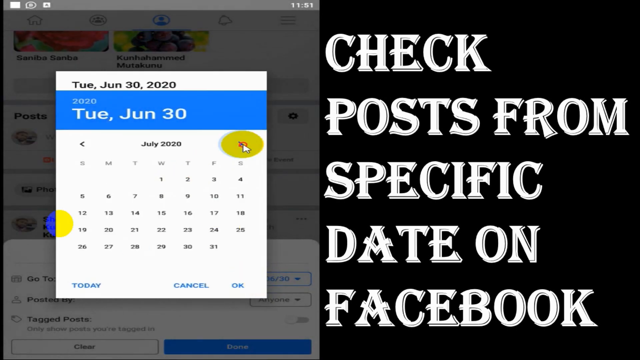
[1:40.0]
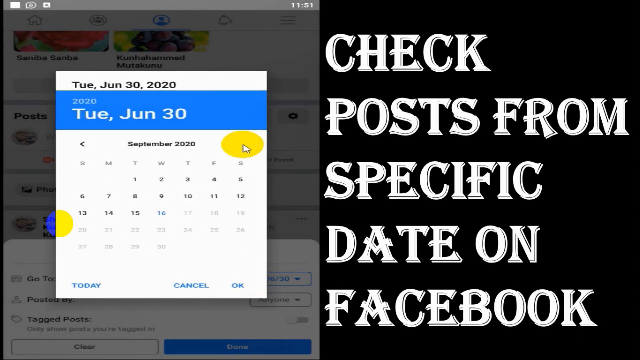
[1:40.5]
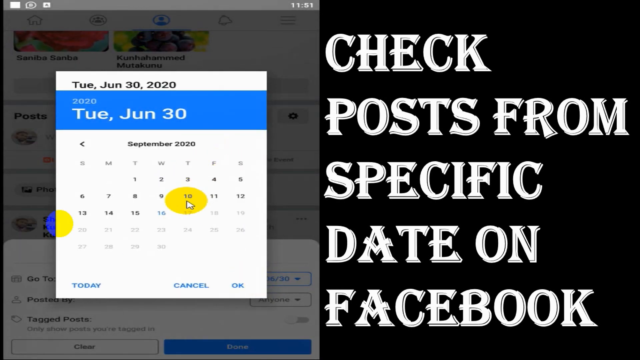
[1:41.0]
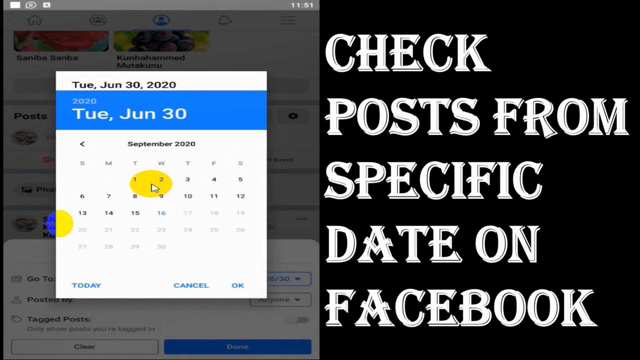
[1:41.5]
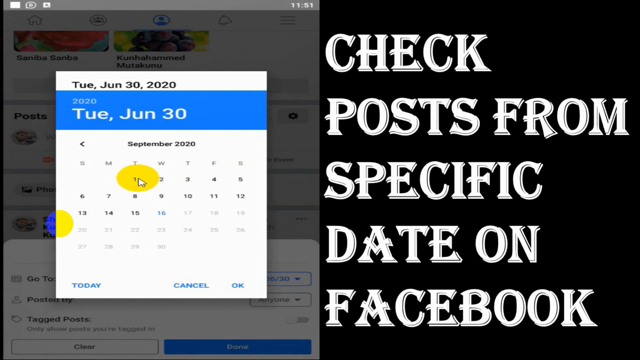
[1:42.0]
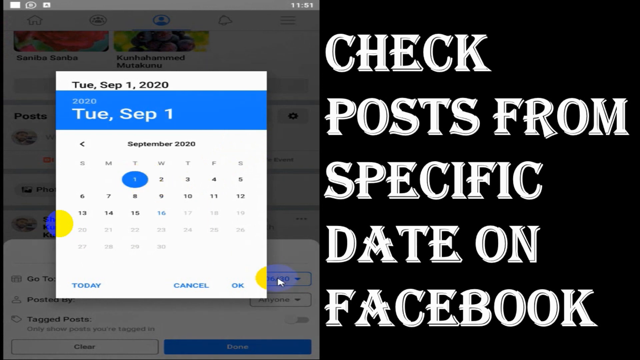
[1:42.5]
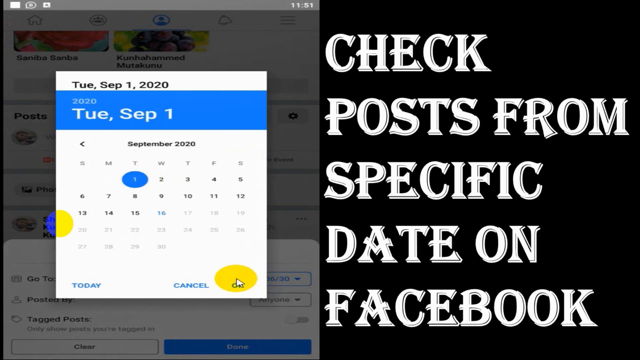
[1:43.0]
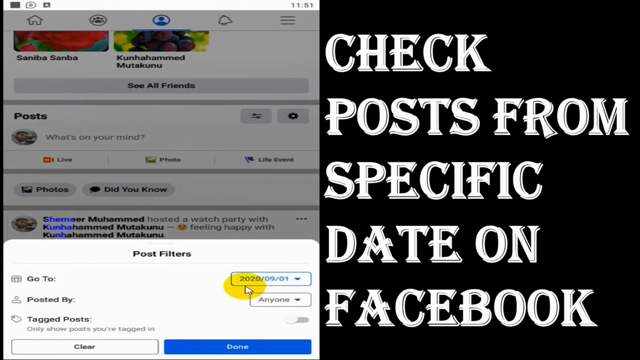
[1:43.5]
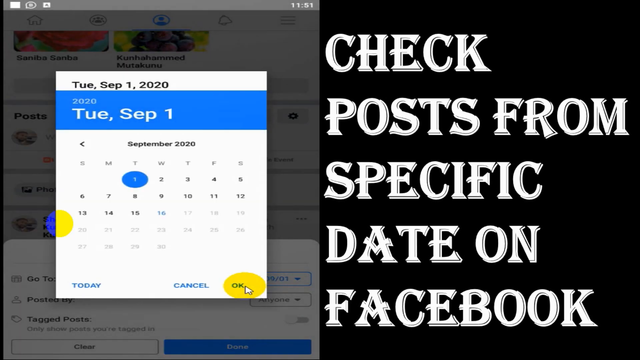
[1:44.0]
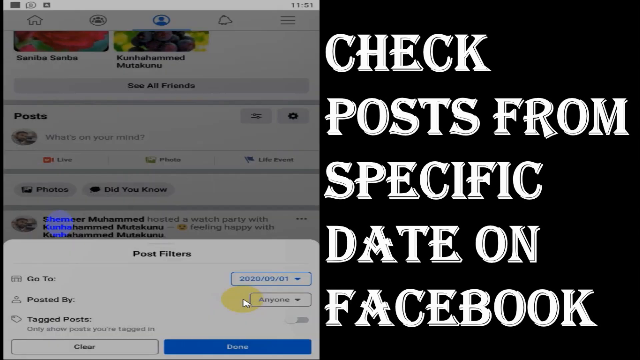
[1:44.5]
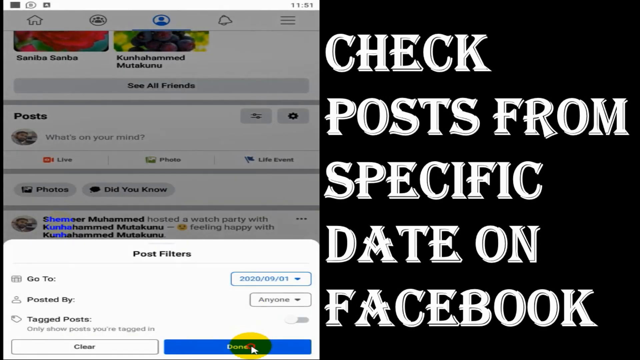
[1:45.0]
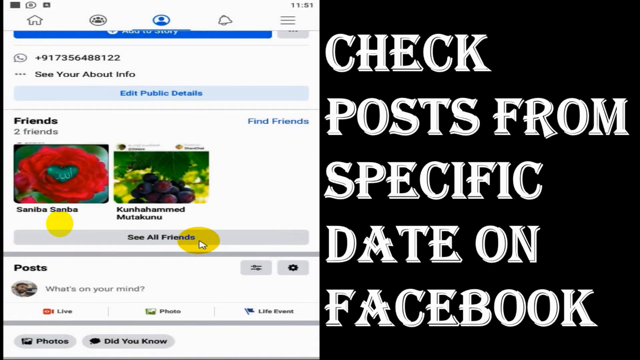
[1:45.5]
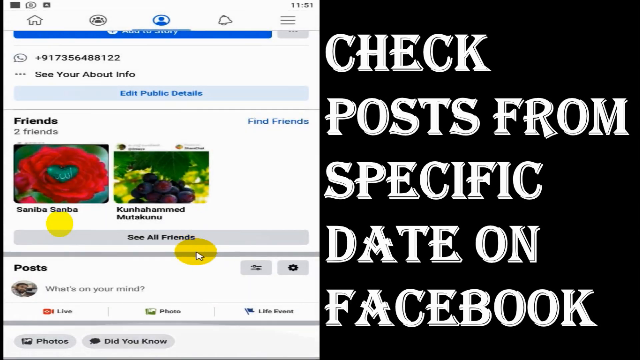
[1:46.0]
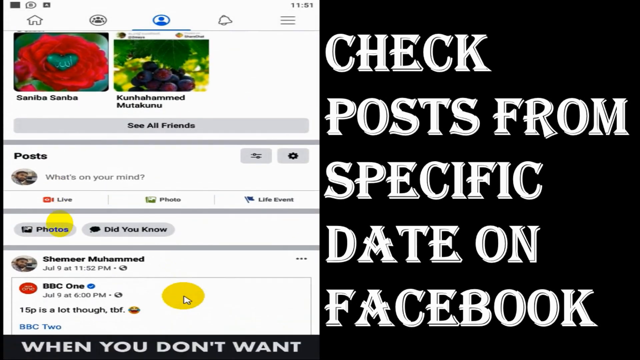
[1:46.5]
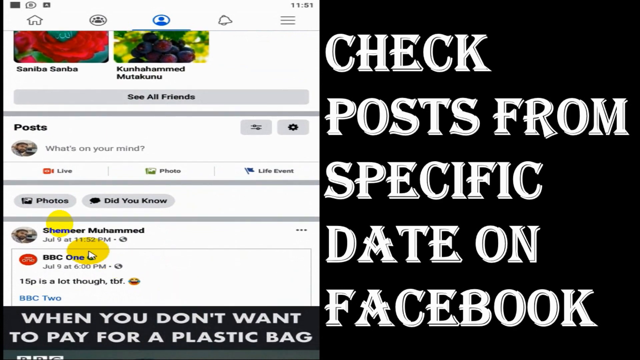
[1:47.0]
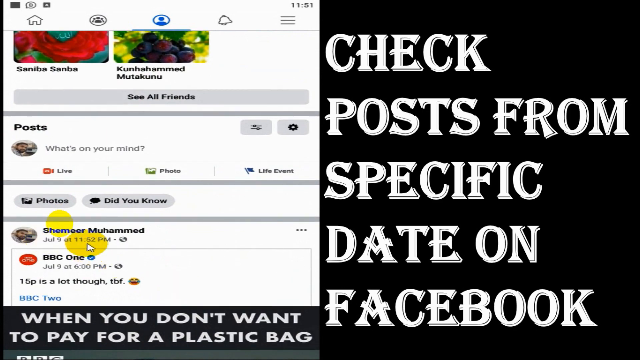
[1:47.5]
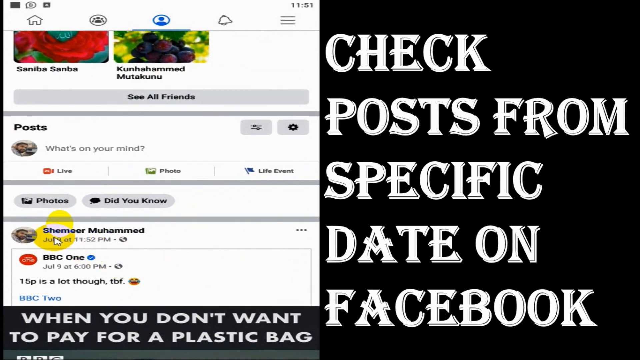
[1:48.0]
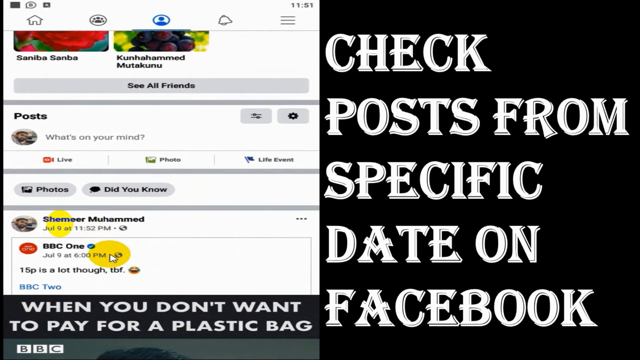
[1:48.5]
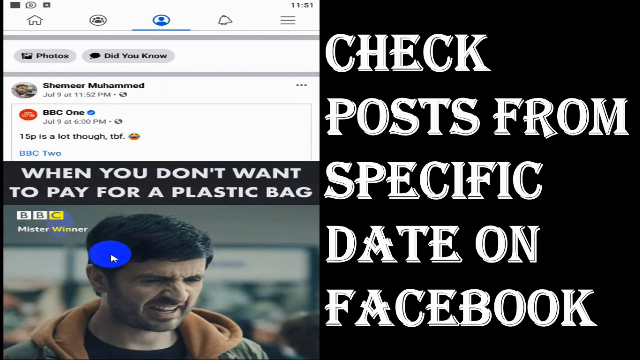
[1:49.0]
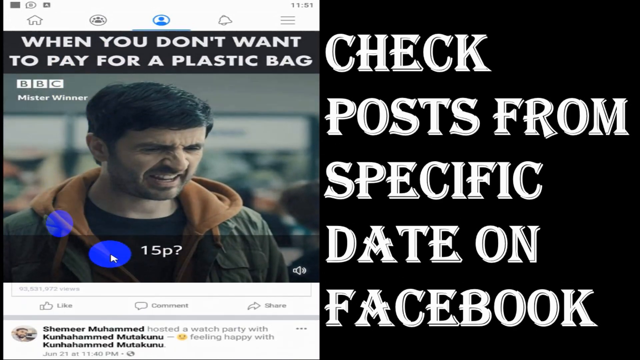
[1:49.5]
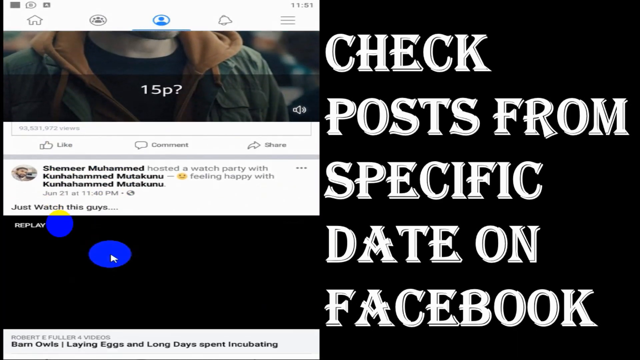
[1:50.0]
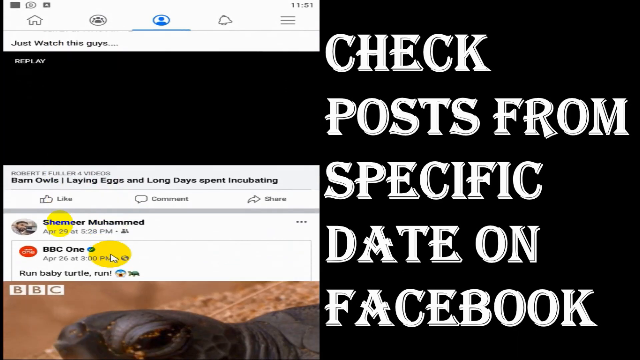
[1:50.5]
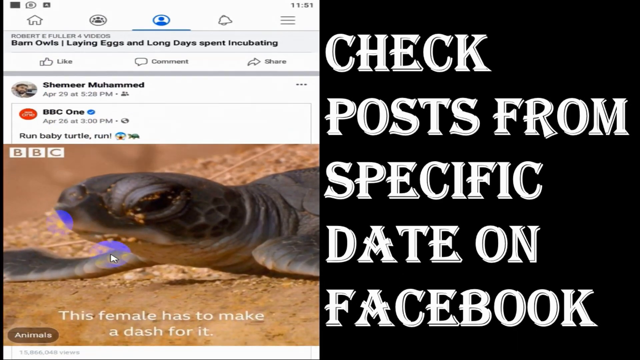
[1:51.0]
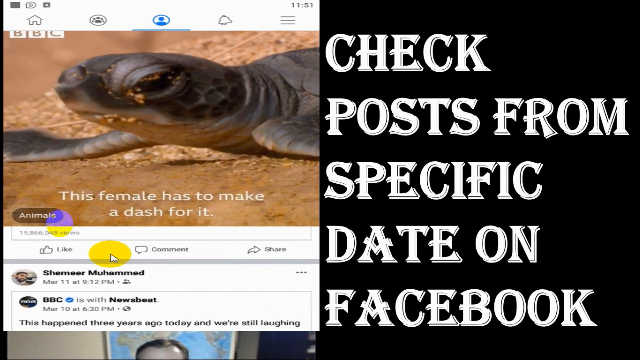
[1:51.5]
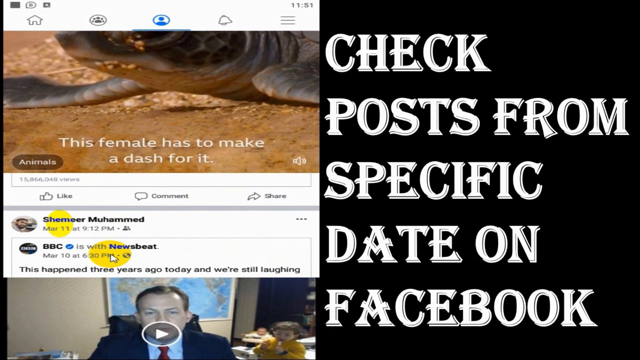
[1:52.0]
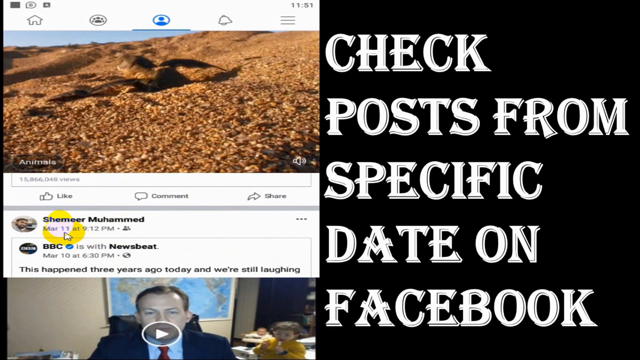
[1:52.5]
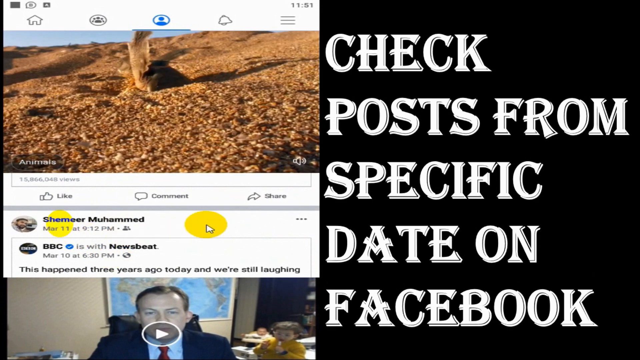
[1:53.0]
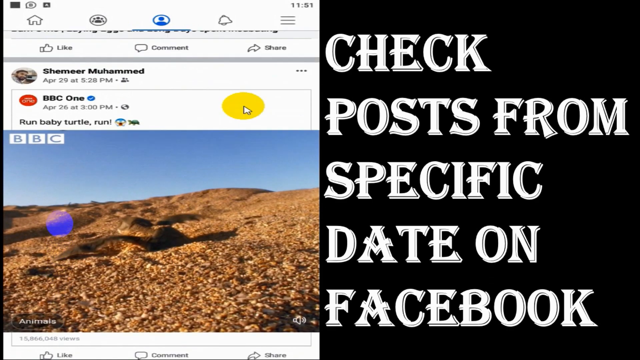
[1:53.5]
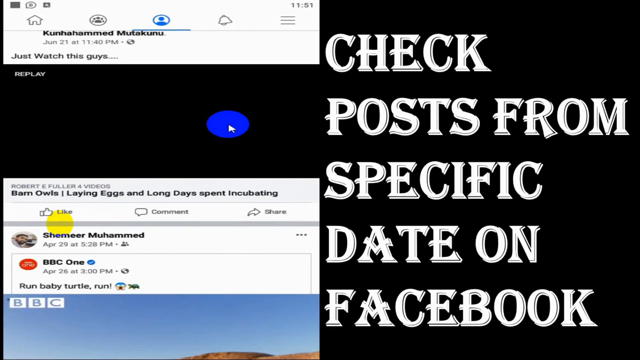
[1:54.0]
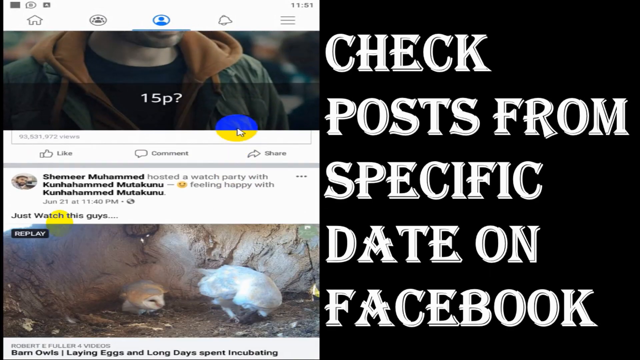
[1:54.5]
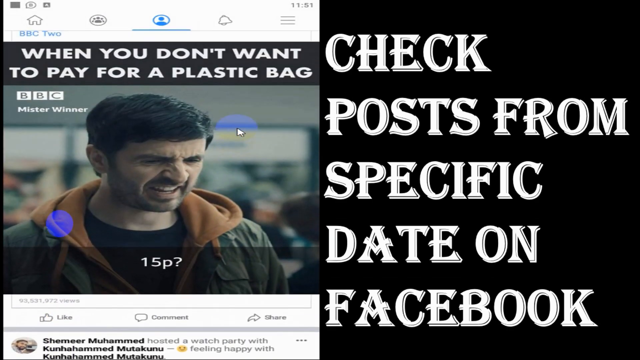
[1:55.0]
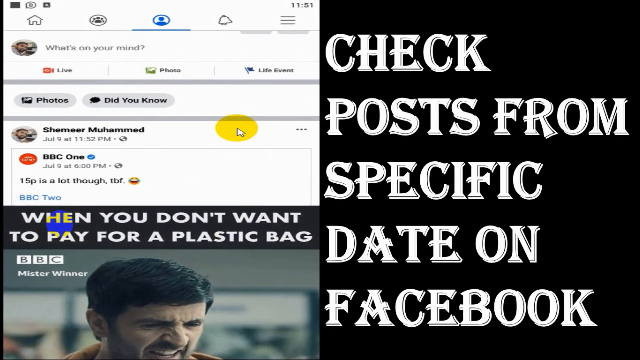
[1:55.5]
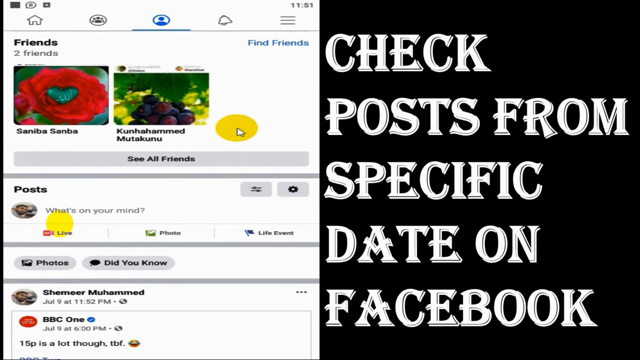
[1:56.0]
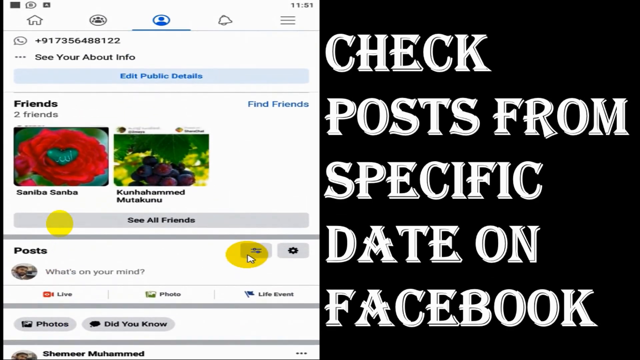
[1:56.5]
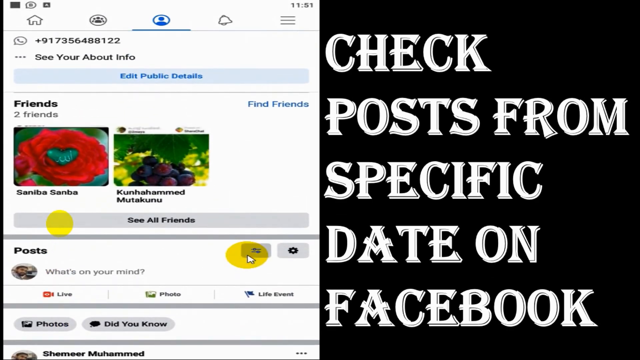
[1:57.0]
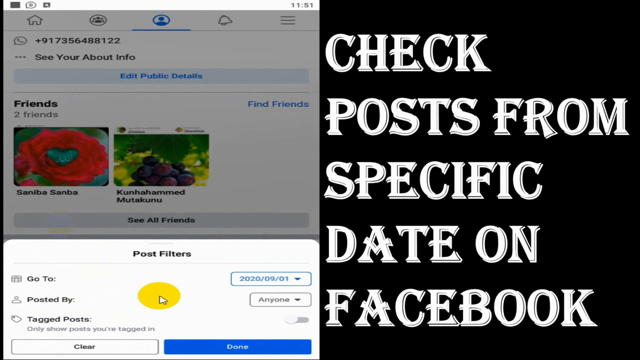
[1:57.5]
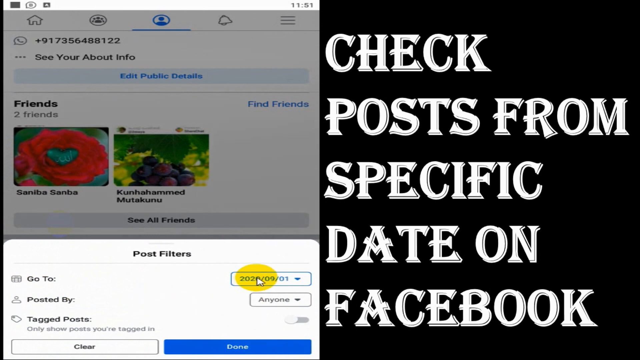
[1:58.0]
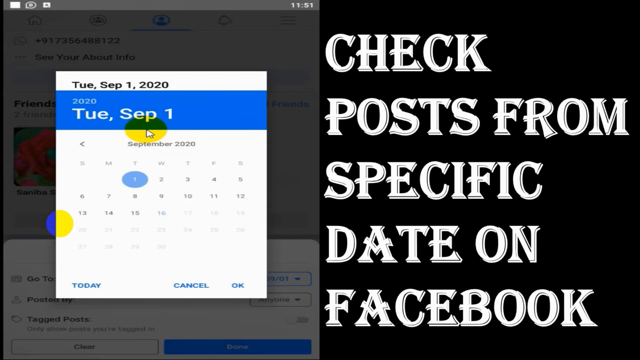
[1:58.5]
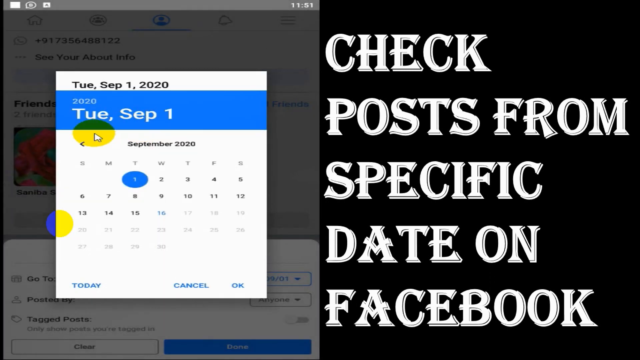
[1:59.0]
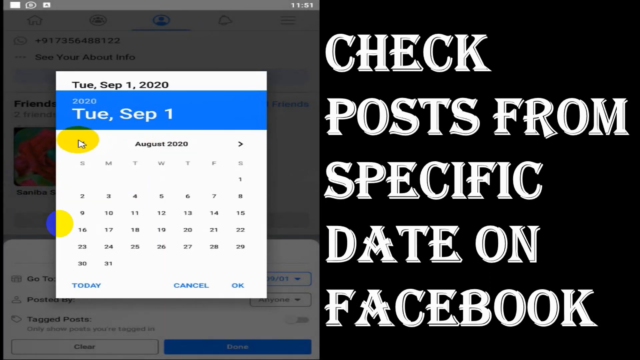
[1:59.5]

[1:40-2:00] A view of Facebook is on the left side of the screen, and the words "check posts from specific date on Facebook" are written in white against a black background on the right. A mouse cursor with a yellow circle around it clicks the right-facing arrow on the Facebook calendar to advance a few months to September 2020. The 1st is clicked, making a blue circle appear around it, and OK is clicked. The calendar is brought back up and clicked away again, and the user clicks done at the bottom of the post filters window. The user scrolls down slightly through Facebook and points the cursor at the date underneath a post. The page is scrolled down past a video meme and a few posts to one of his own posts, and the user briefly points at the date again. The page is scrolled back up, and the hamburger button is clicked again to bring up the post filters window. The date is clicked, the calendar comes up, and the left-facing arrow is clicked a few times to move back in time.